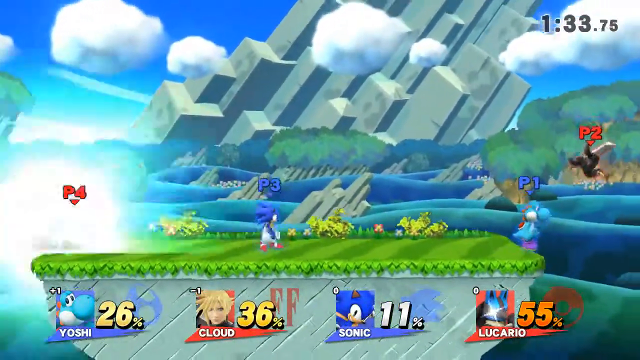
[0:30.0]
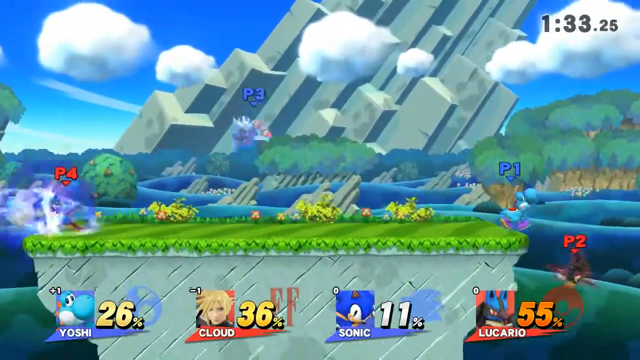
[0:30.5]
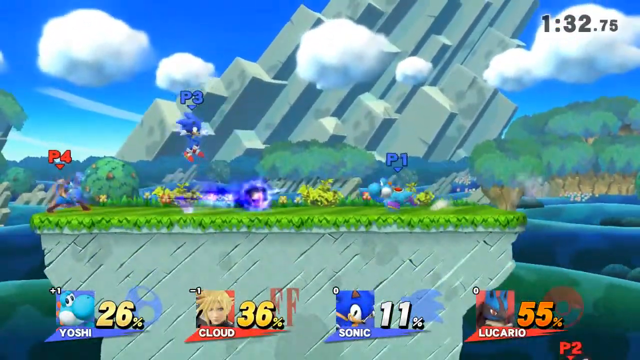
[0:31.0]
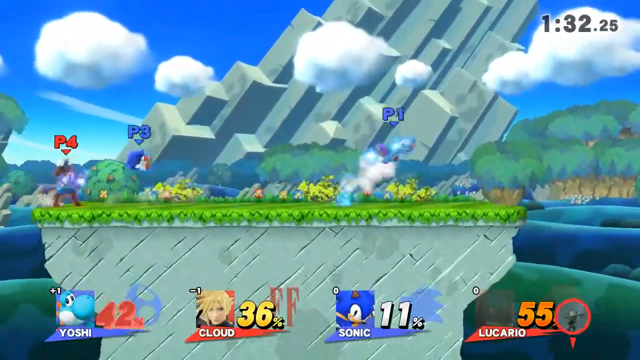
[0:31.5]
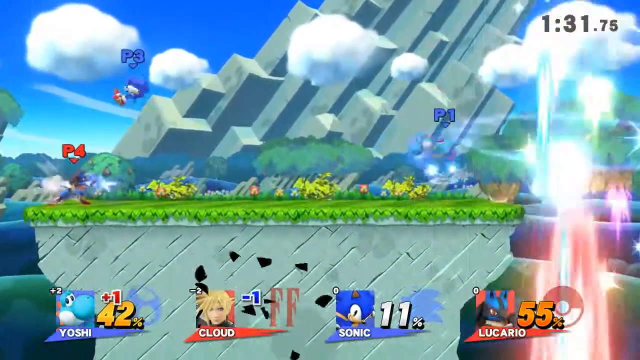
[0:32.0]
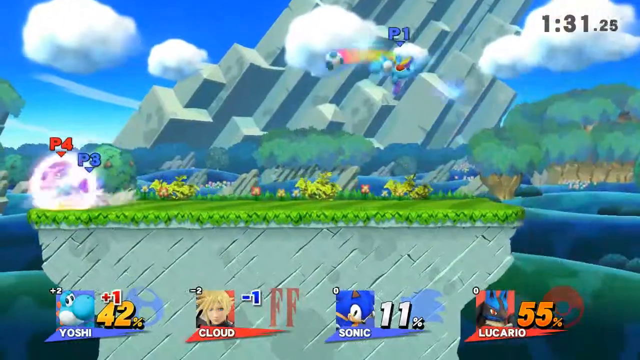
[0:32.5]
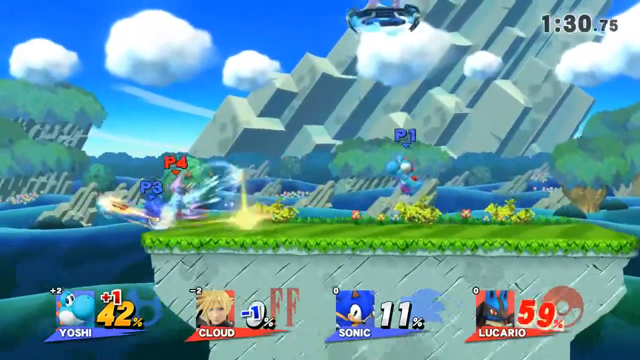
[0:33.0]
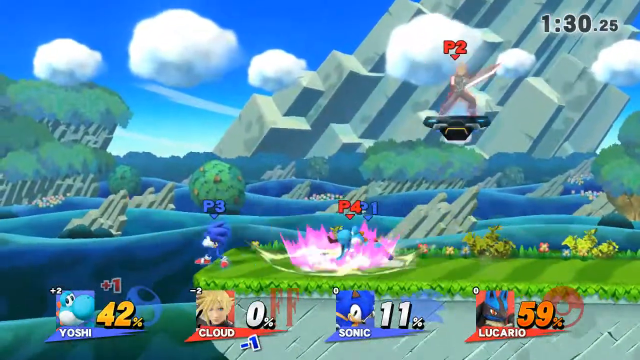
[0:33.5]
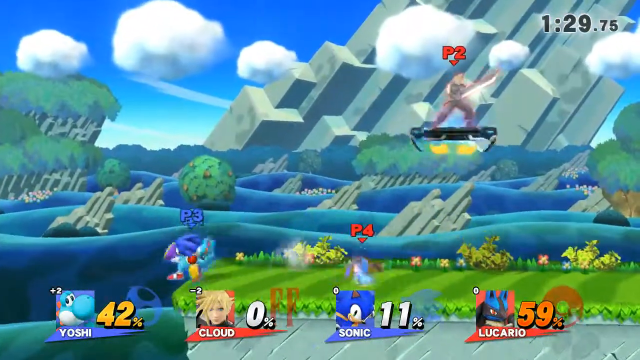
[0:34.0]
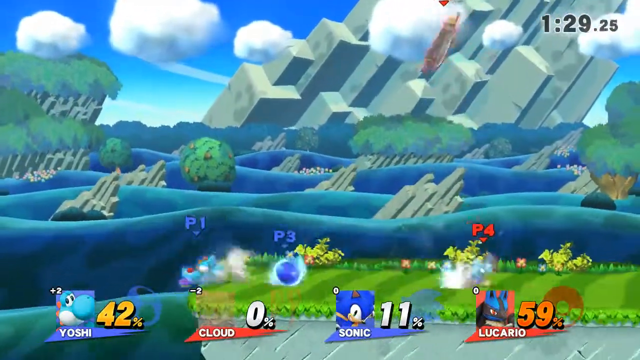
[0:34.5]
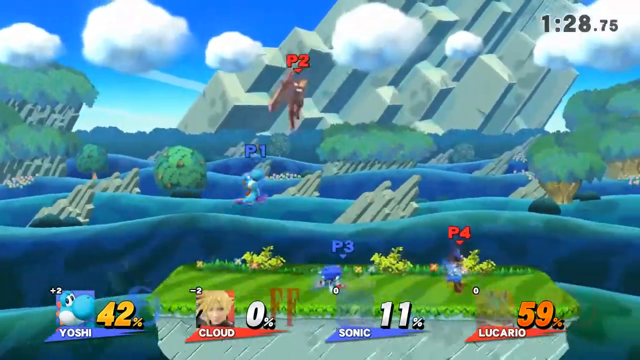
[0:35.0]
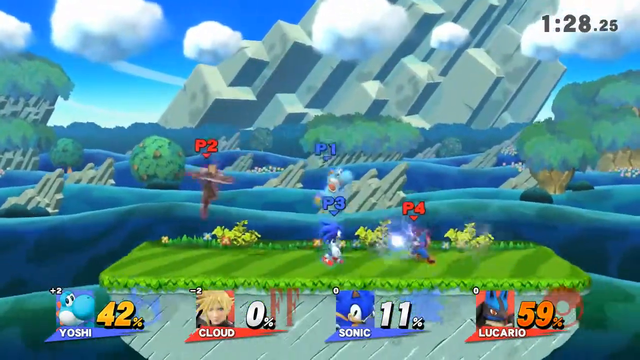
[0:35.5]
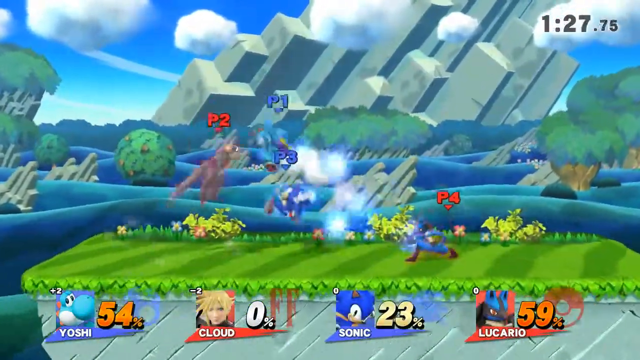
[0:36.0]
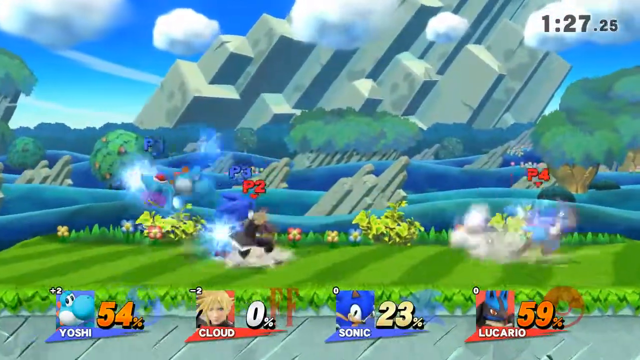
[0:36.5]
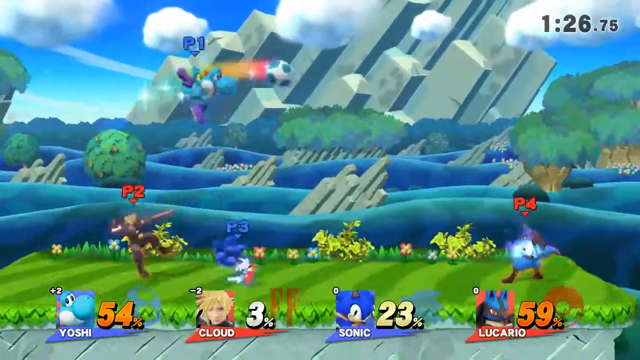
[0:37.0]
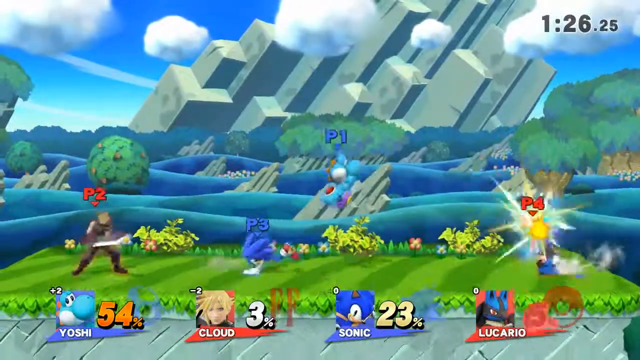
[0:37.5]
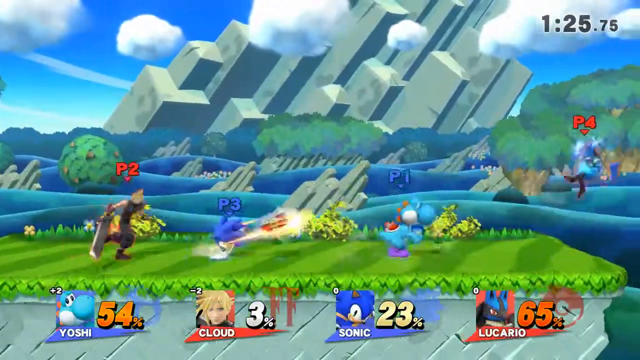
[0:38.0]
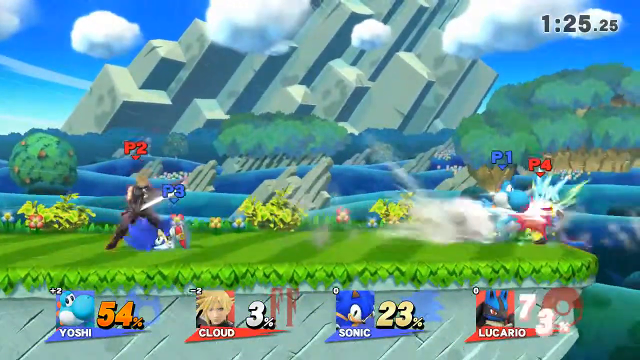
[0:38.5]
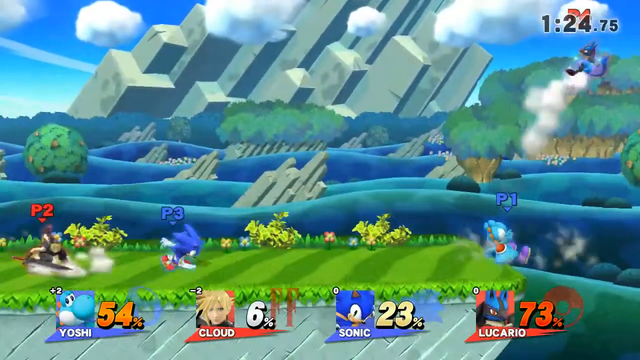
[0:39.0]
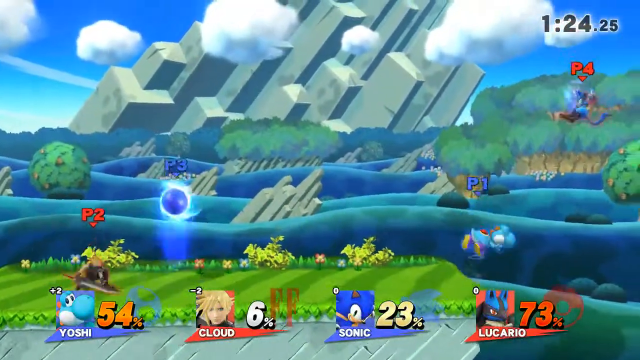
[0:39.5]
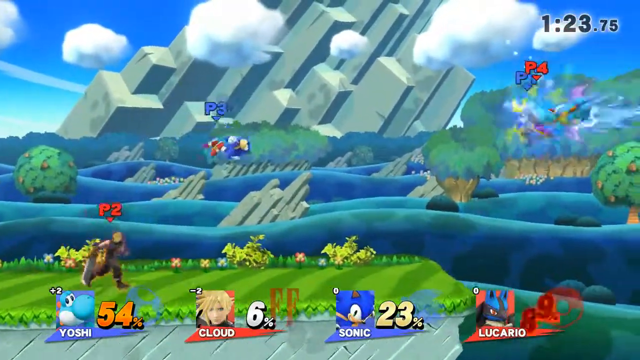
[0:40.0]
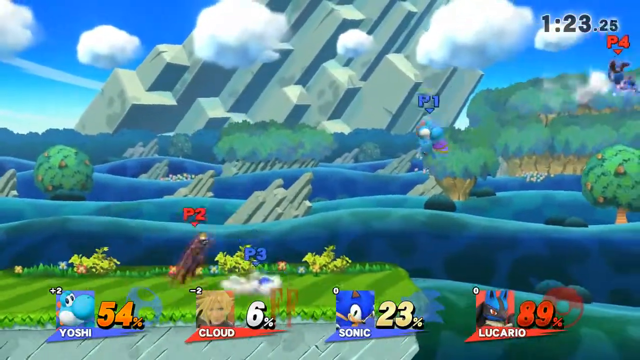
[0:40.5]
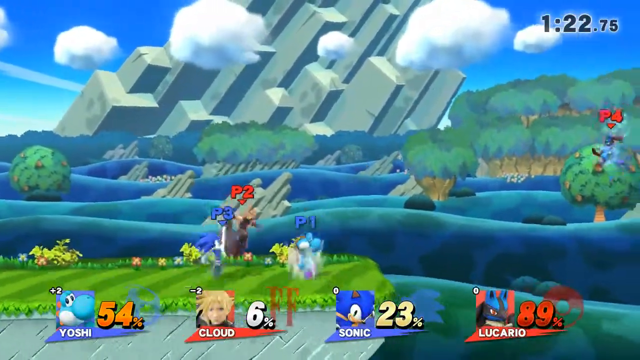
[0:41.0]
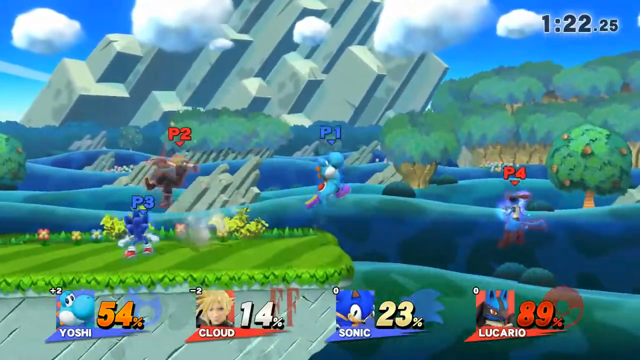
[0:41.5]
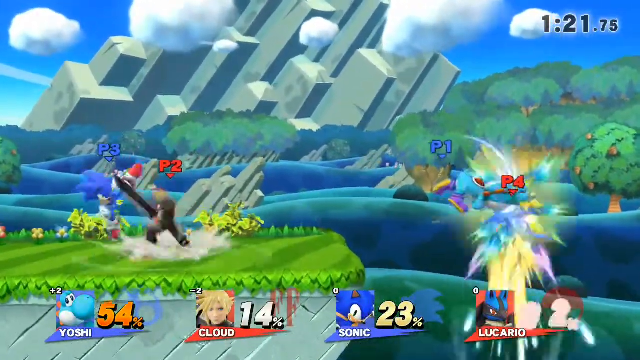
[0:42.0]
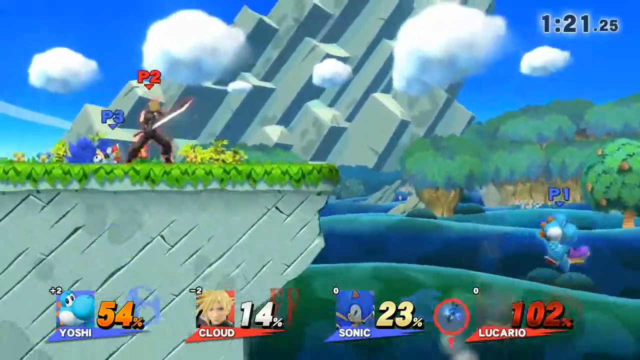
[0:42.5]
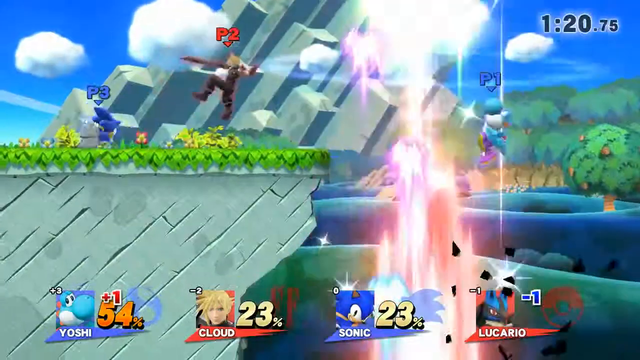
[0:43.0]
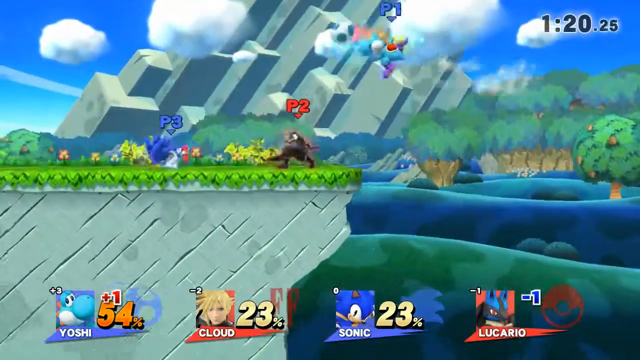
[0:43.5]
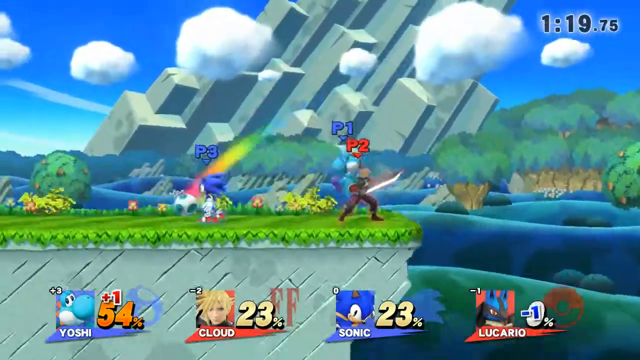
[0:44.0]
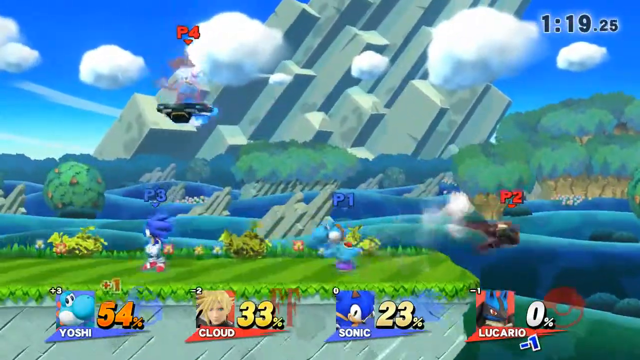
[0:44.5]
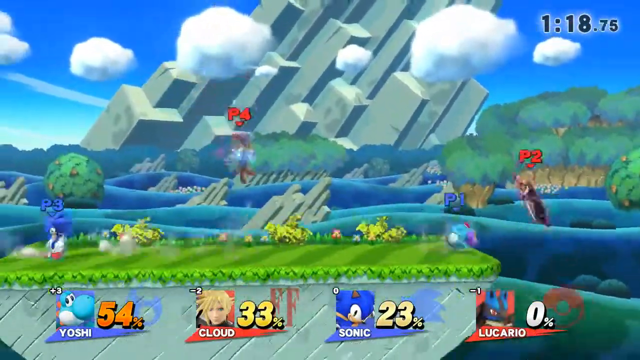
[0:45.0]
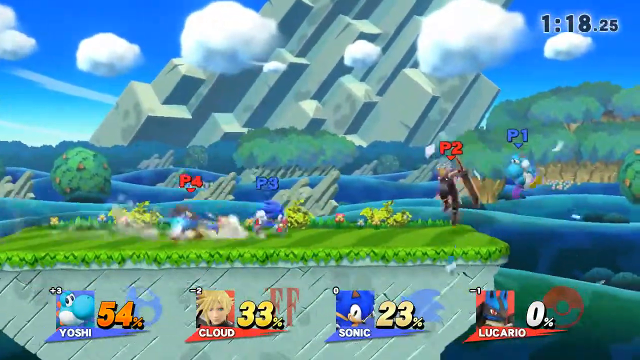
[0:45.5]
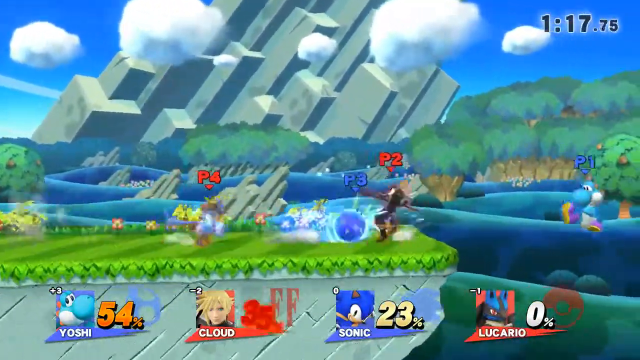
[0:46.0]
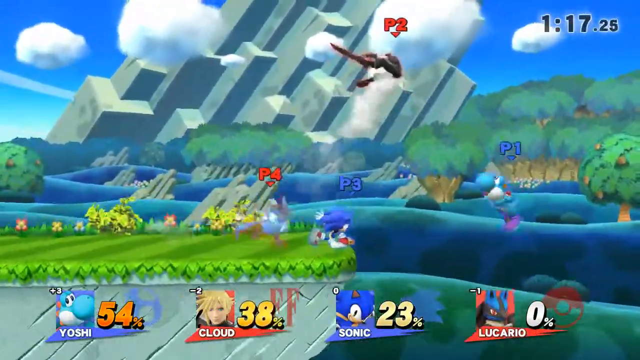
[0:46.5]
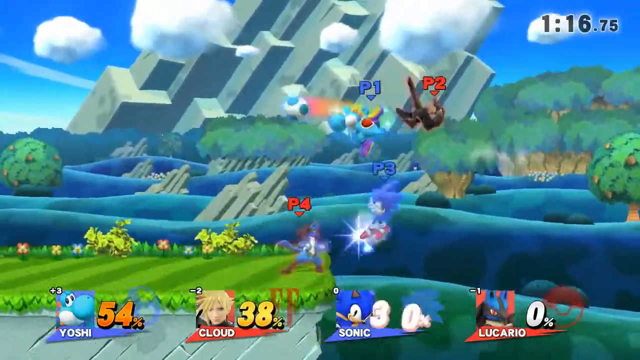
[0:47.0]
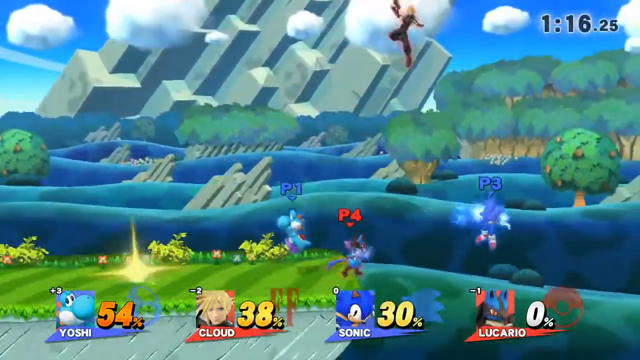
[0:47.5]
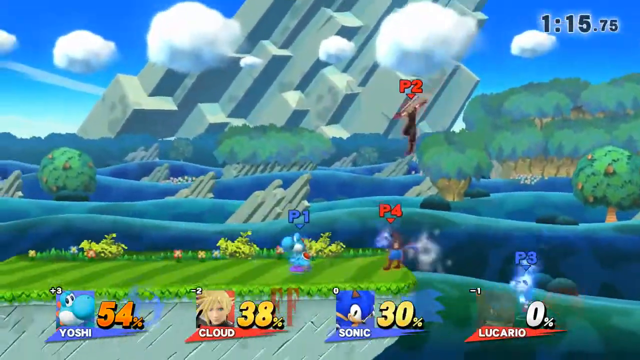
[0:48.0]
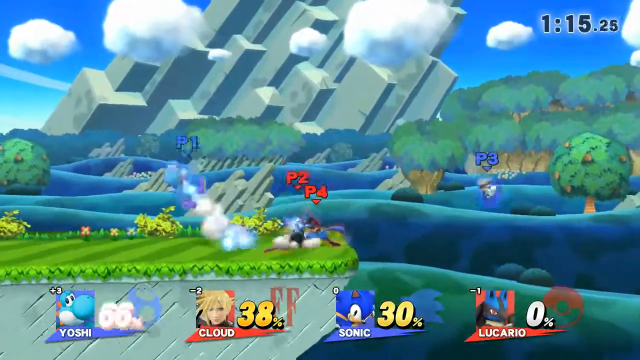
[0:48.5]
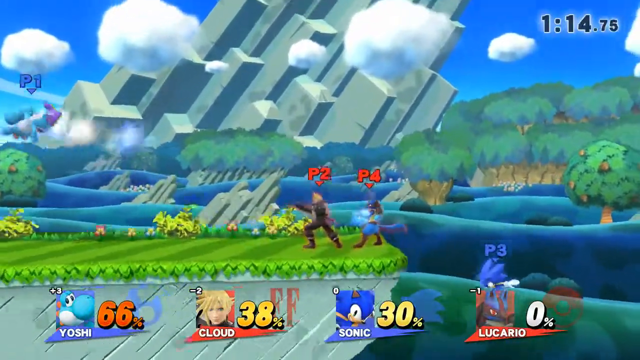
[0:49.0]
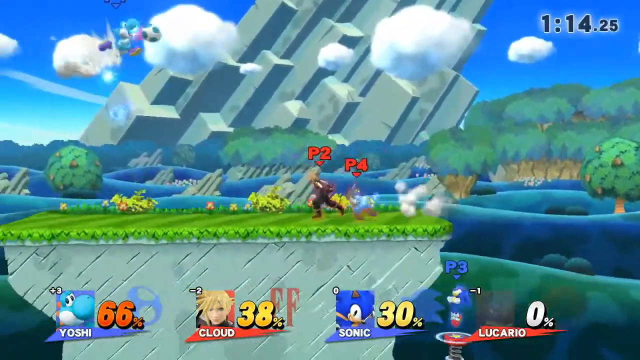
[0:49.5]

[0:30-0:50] The clock shows 1 minute 33 seconds, with Yoshi at 26%, Cloud at 36%, Sonic at 11%, and Lucario at 55%. One of the red players, Cloud, is knocked off again, and a minus one pops up on his icon. Lucario's damage climbs into the 70s before he is knocked off and drops to 0%. By the end, Yoshi is at 66%, Cloud at 38%, Sonic at 30%, and Lucario at 0%.